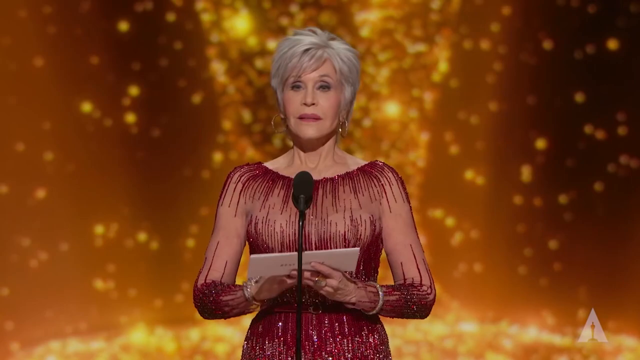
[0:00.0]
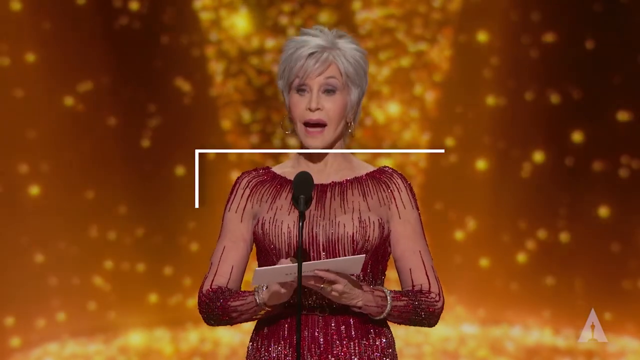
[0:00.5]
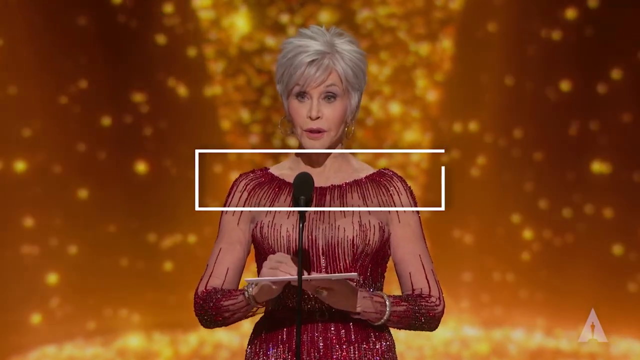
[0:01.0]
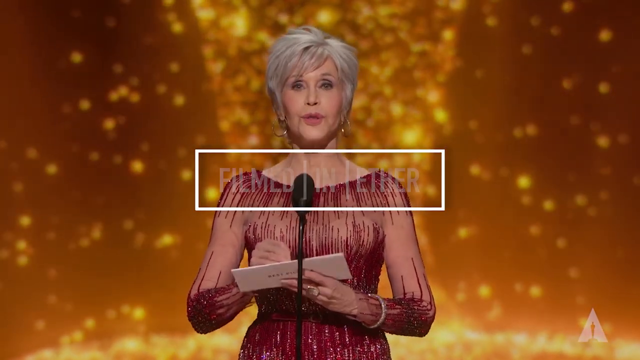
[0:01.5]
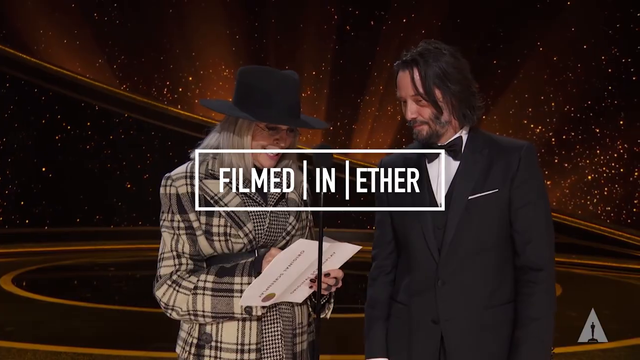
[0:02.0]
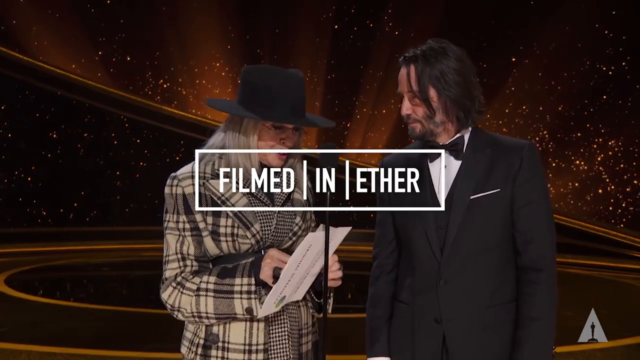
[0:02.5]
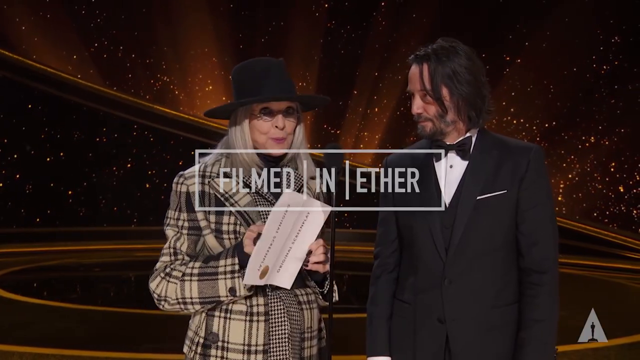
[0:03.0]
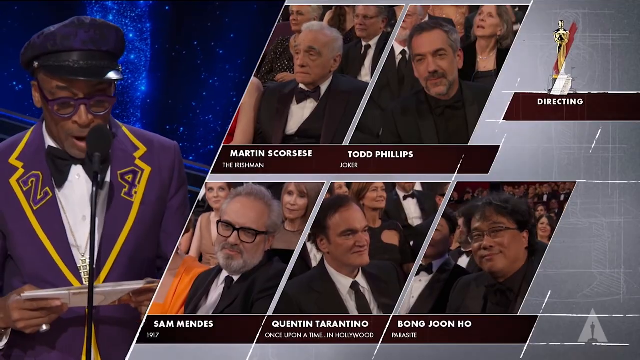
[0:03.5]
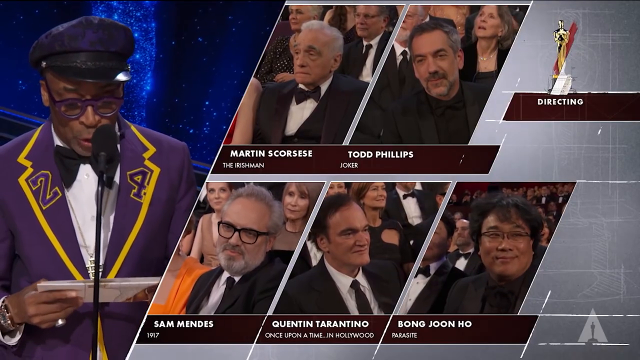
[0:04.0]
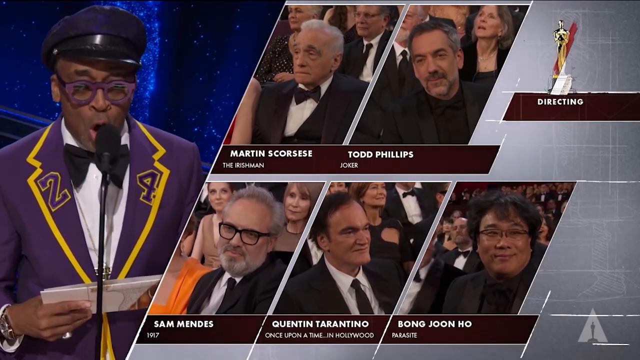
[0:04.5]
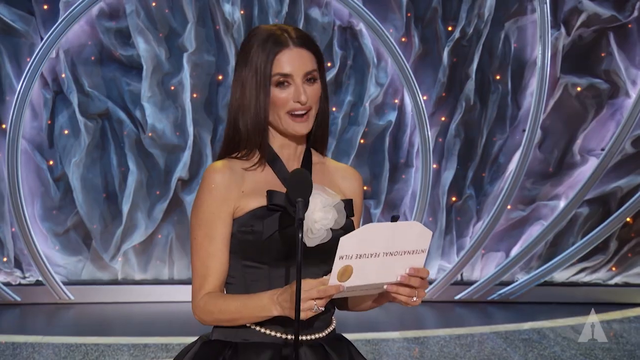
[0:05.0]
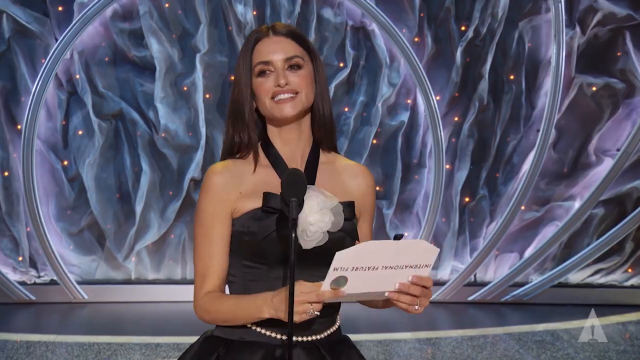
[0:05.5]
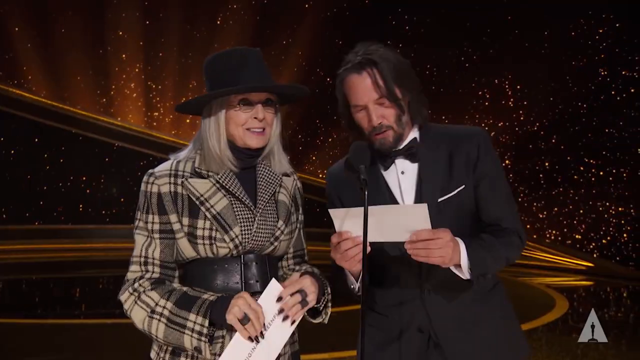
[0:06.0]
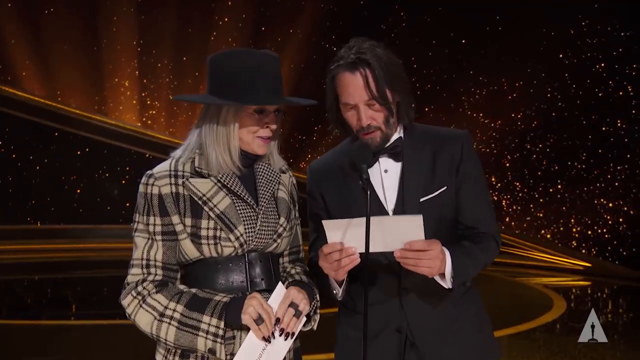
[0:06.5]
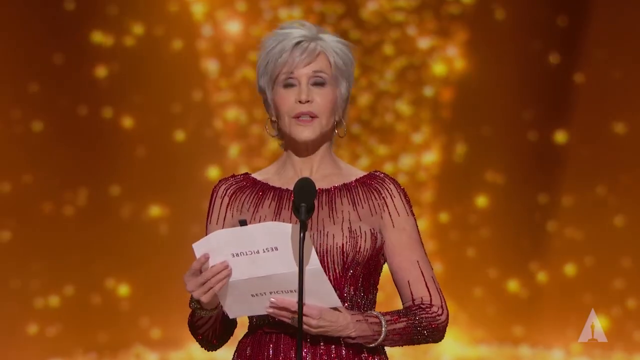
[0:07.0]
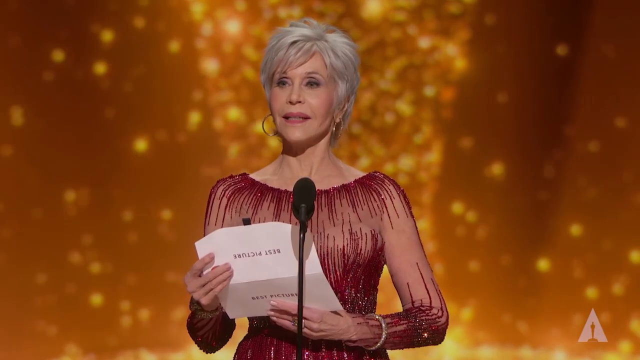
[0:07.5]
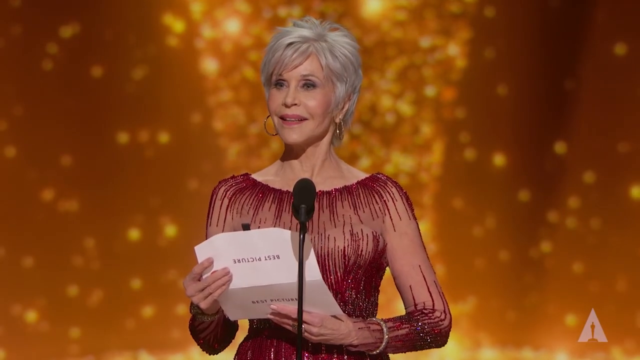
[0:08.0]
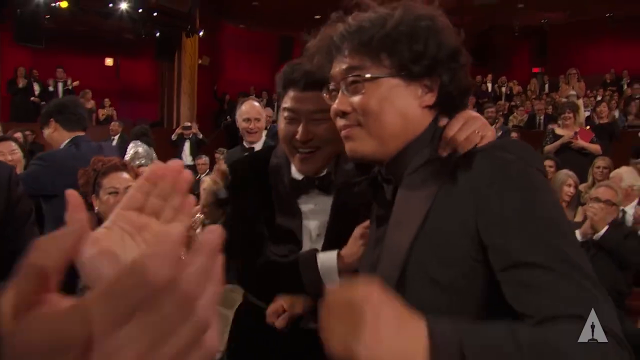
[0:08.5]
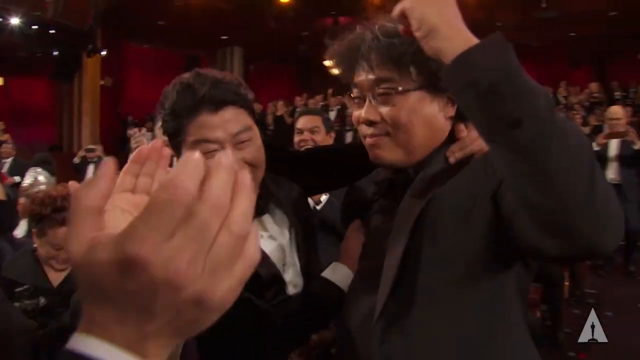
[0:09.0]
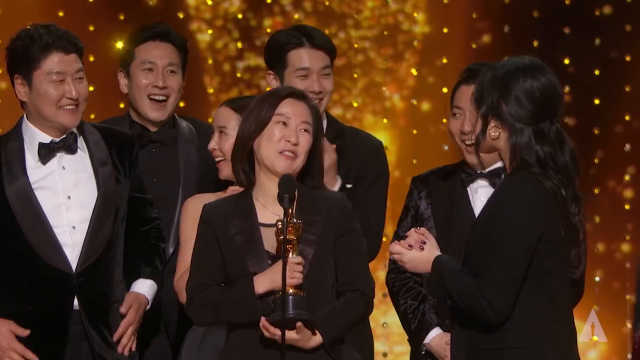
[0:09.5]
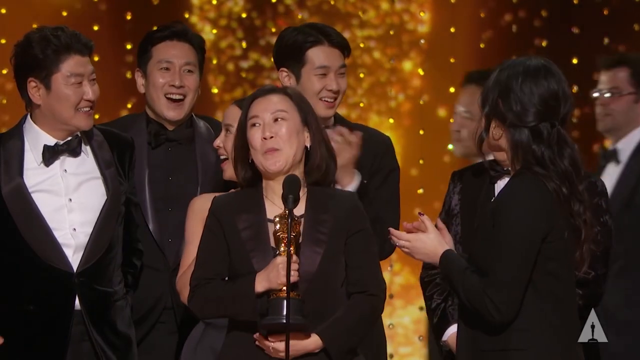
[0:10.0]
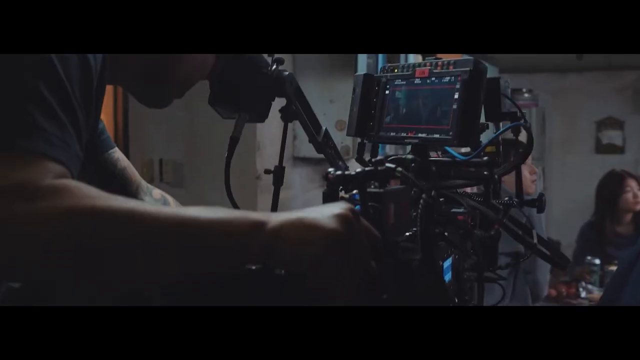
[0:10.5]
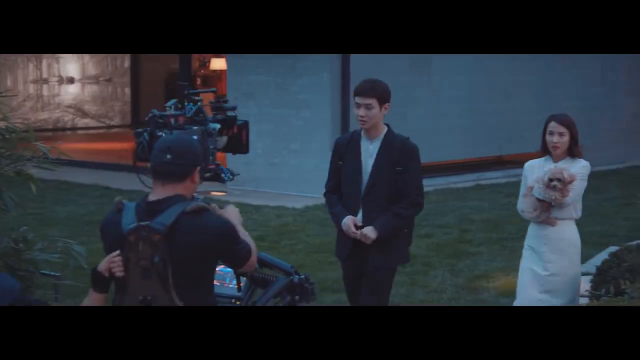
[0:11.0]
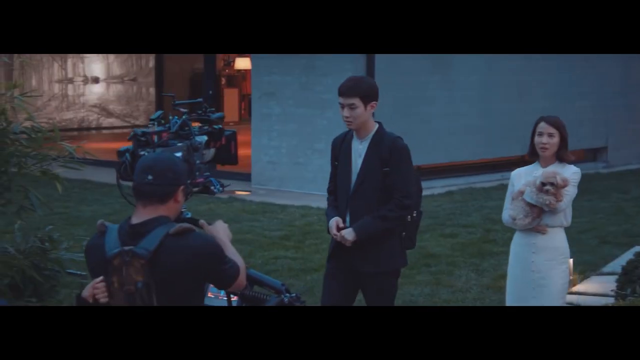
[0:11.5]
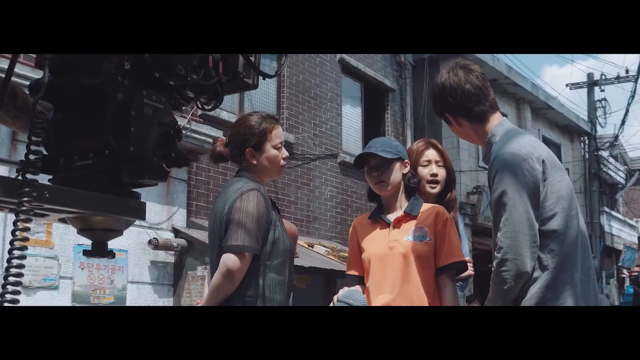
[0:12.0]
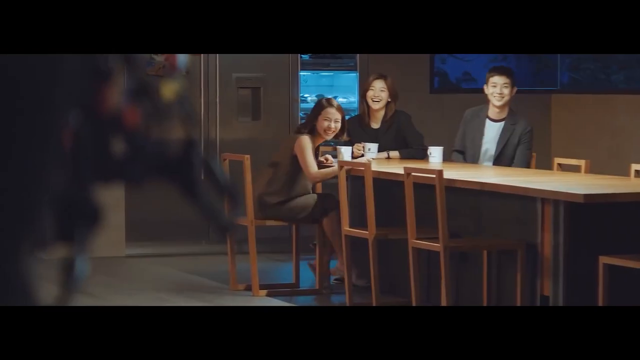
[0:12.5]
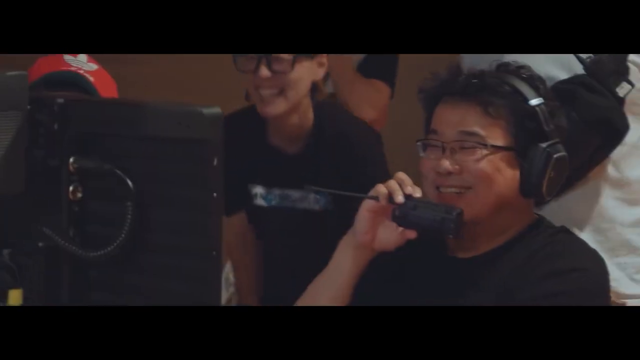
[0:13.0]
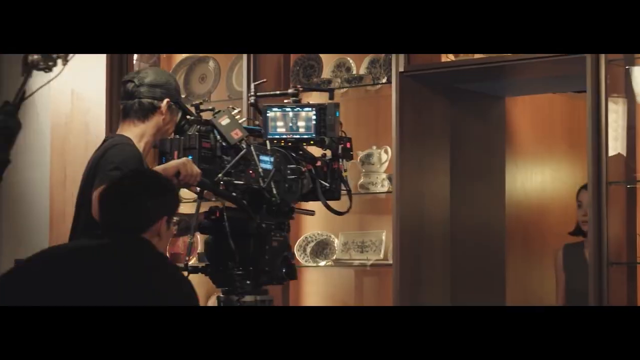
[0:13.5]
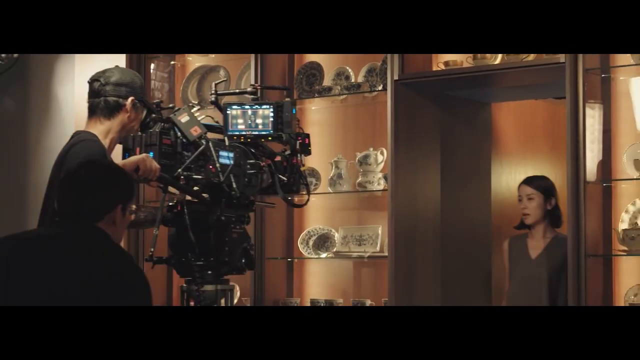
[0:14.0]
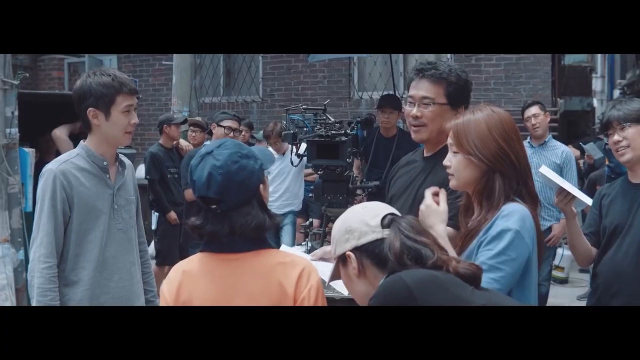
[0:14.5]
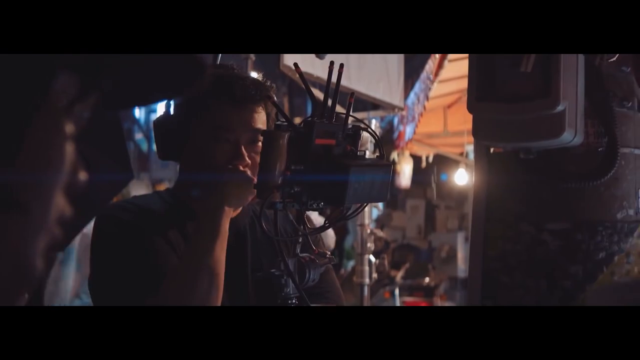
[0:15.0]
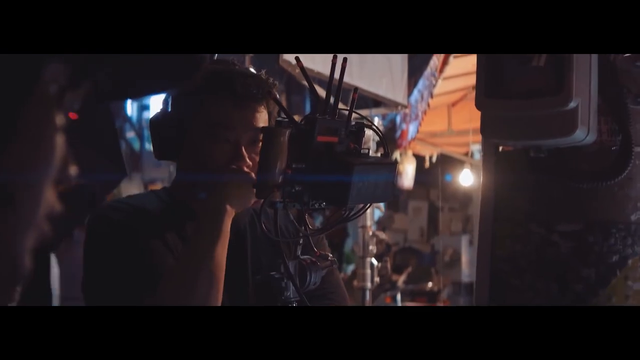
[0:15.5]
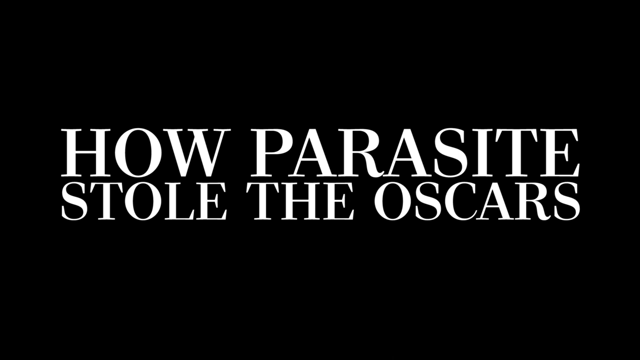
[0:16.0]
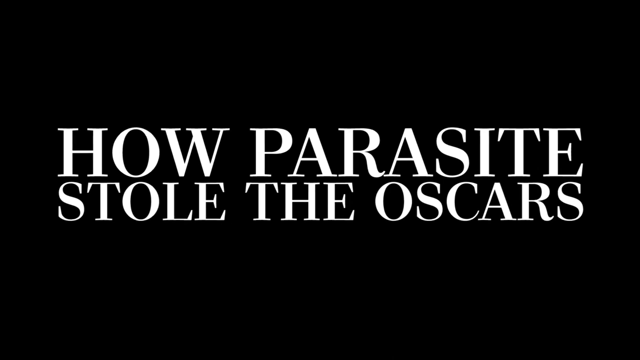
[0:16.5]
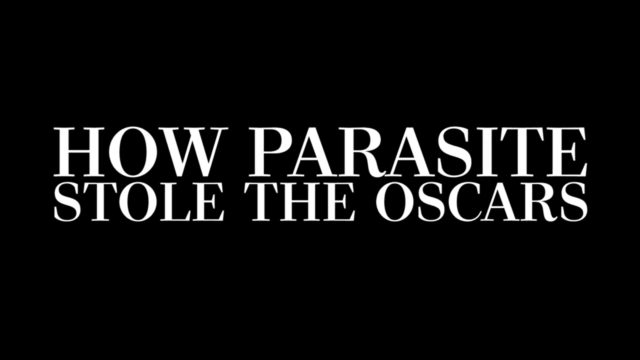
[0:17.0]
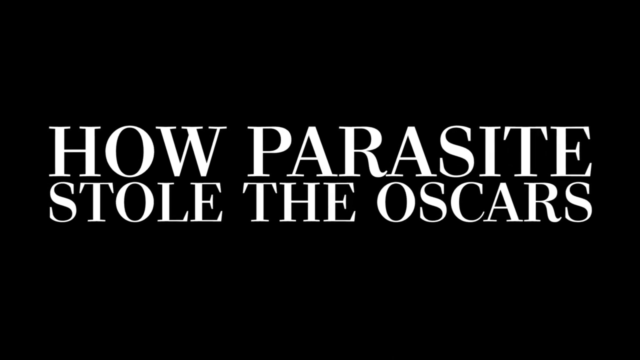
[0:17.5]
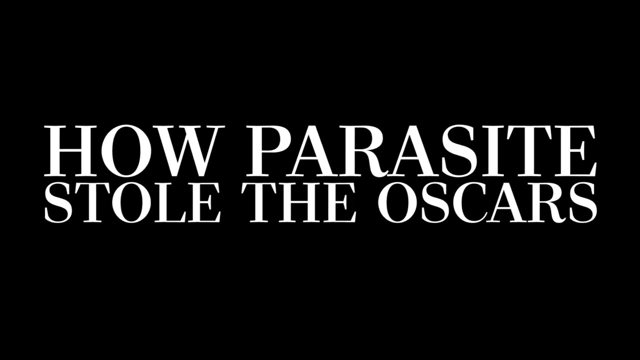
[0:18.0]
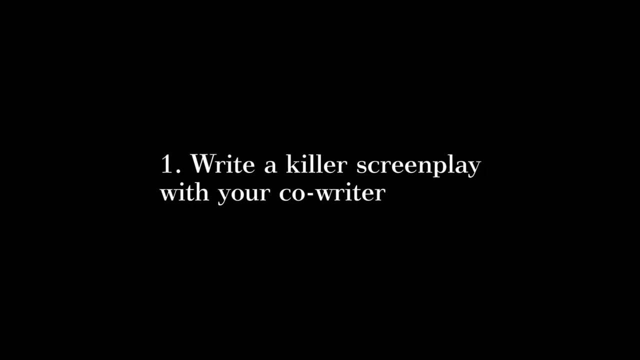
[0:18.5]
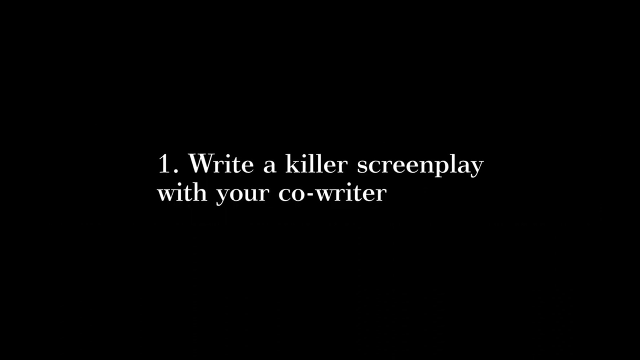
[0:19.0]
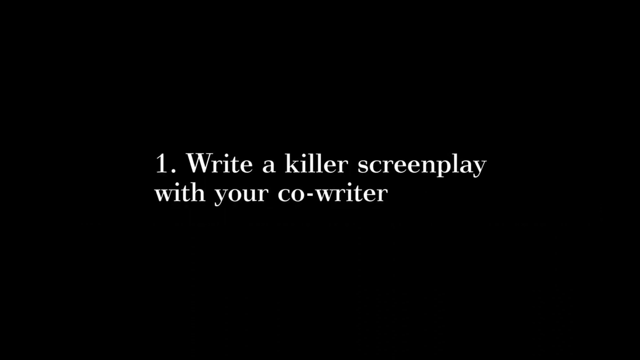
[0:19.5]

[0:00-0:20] The video seems to show an awards ceremony for the entertainment industry, with well-known celebrities. First, a beautiful woman appears wearing a beautiful dress; she seems to be 50 to 65 years of age and has a gray pixie hairstyle. The background where she is standing is beautiful, and she is about to announce the winner. Another man appears wearing a purple and gold blazer, a bowtie, glasses, a hat and a white shirt. On the side, older men are shown in pictures: Martin Scorsese, Toro Phillips, Sam Mendes, Quentin Tarantino and Bong Joon-Ho. Something then seems to be announced, and some people appear to have won, as some of them are celebrating.